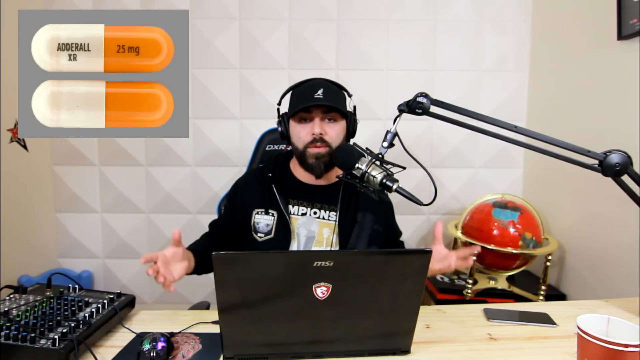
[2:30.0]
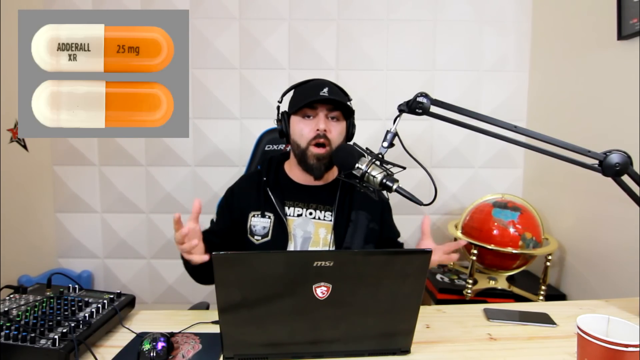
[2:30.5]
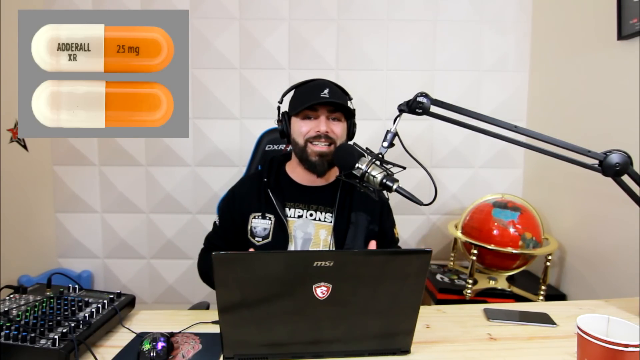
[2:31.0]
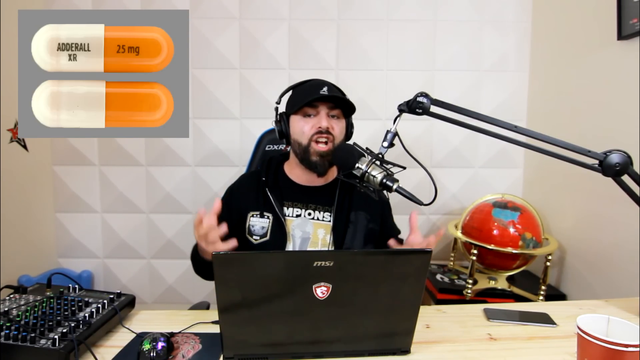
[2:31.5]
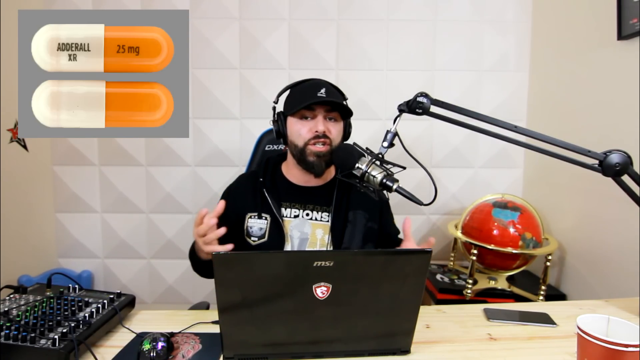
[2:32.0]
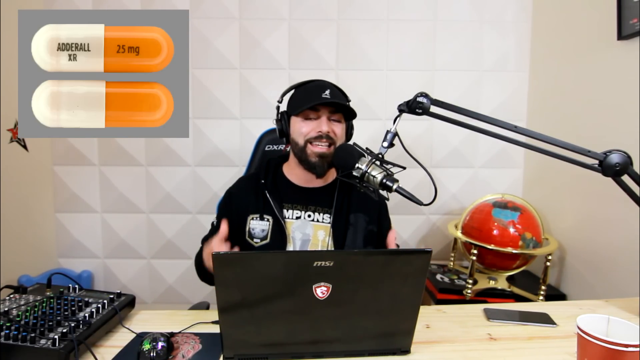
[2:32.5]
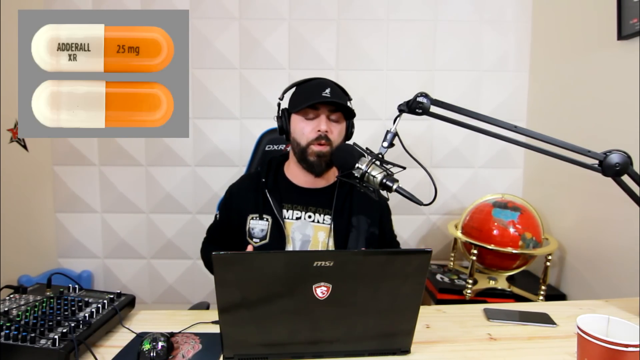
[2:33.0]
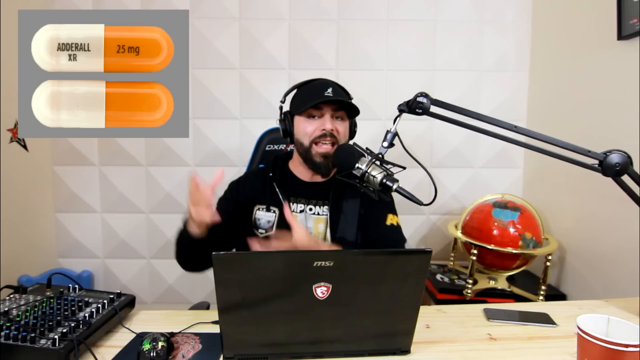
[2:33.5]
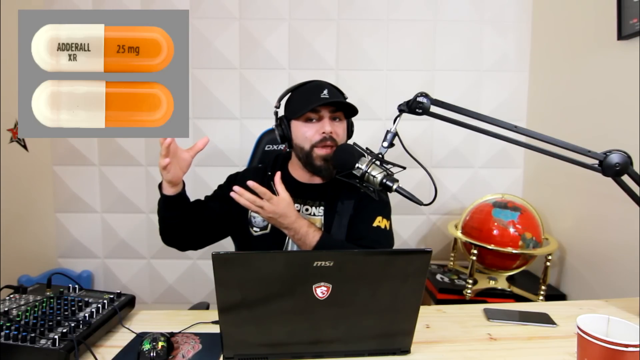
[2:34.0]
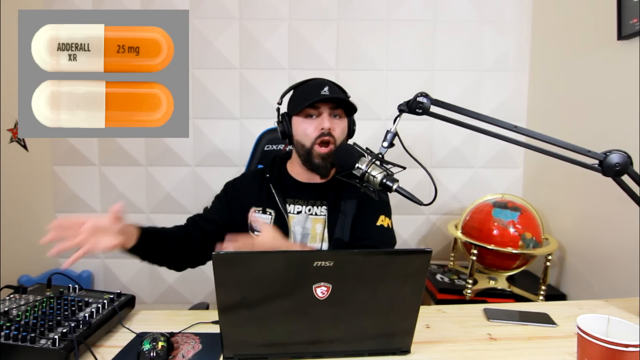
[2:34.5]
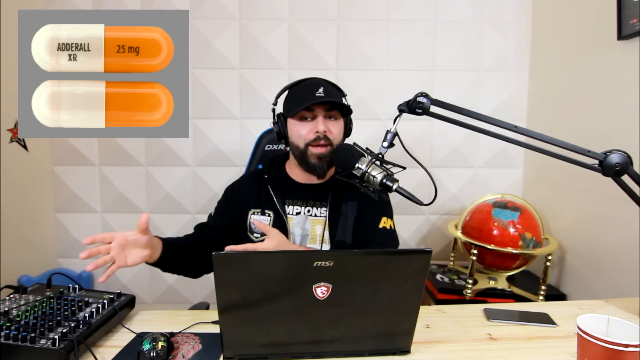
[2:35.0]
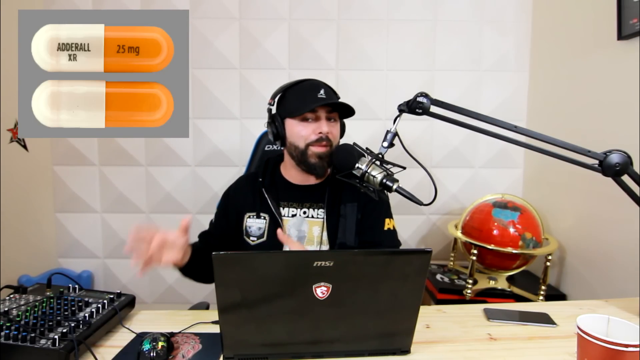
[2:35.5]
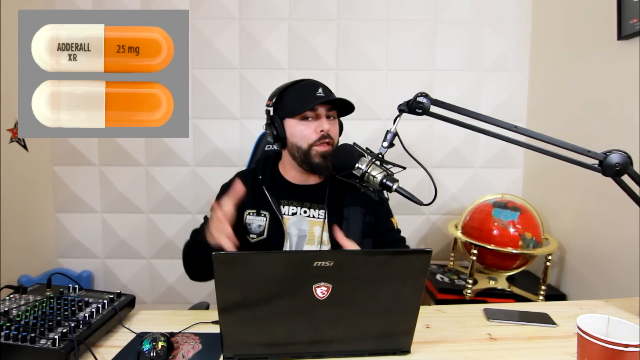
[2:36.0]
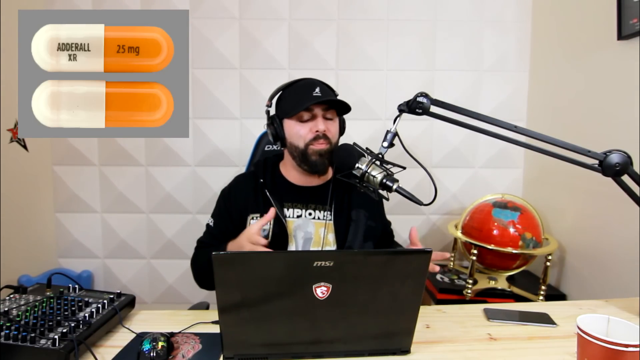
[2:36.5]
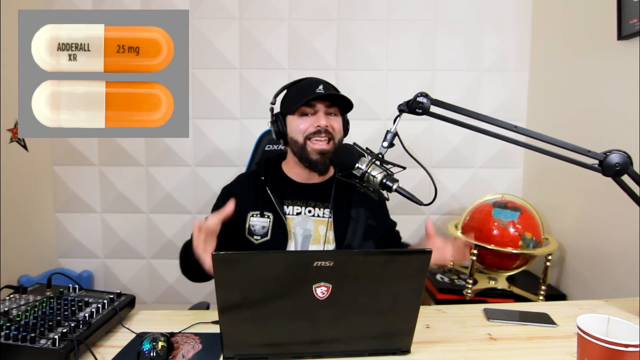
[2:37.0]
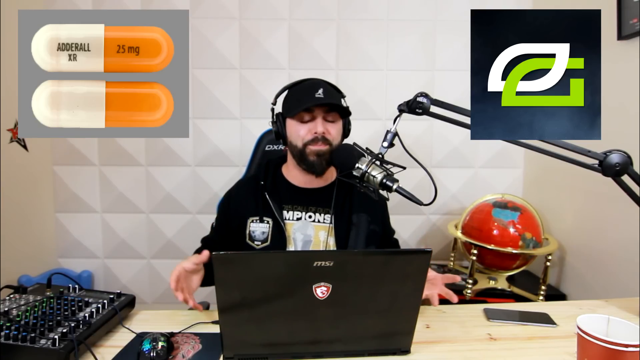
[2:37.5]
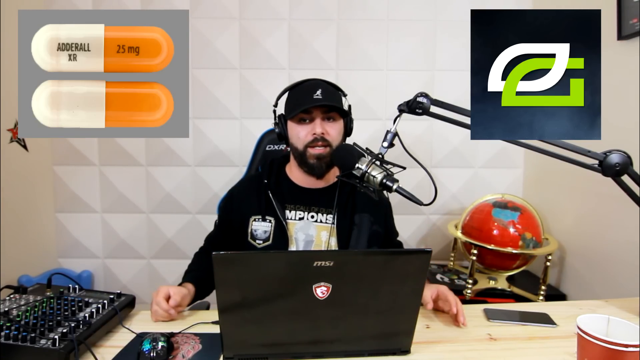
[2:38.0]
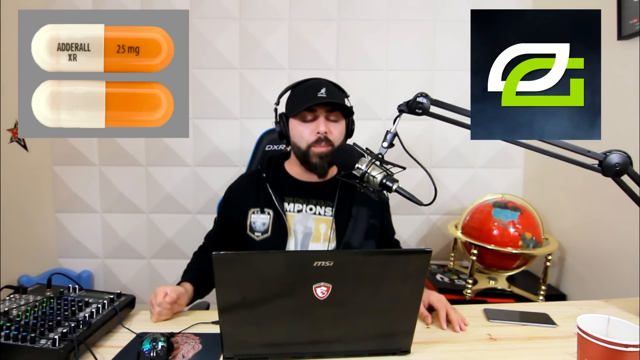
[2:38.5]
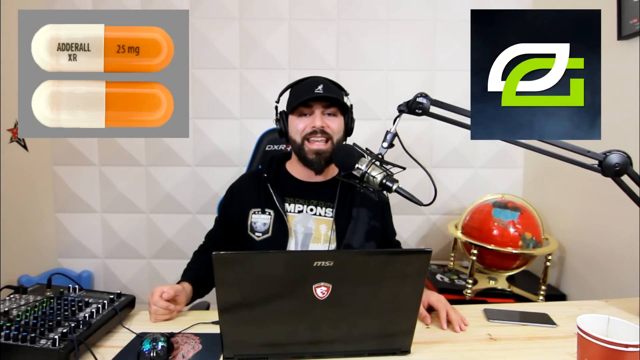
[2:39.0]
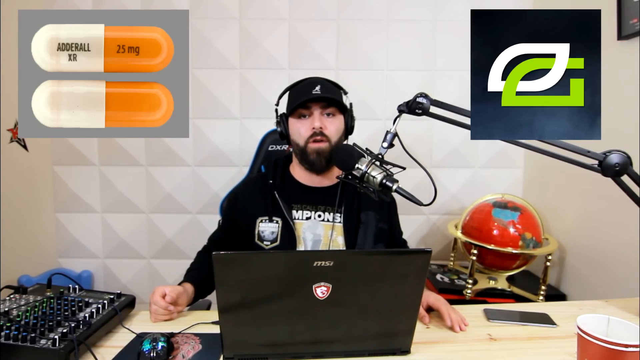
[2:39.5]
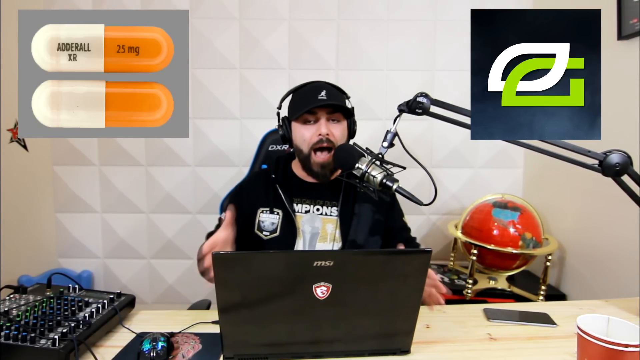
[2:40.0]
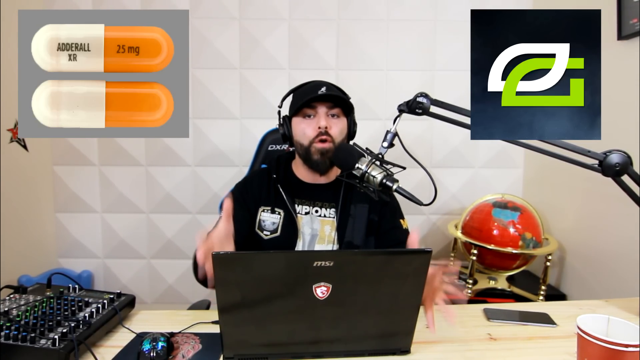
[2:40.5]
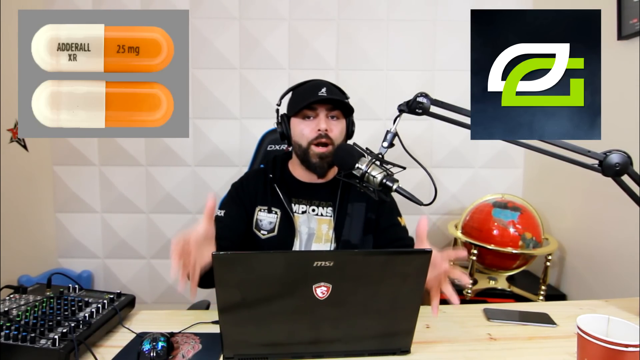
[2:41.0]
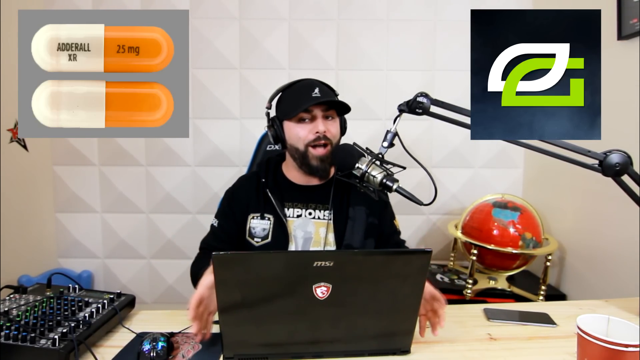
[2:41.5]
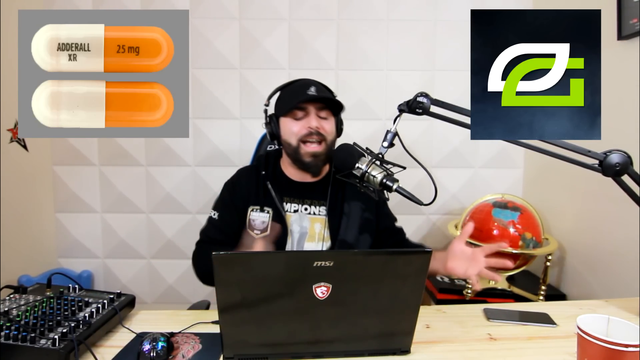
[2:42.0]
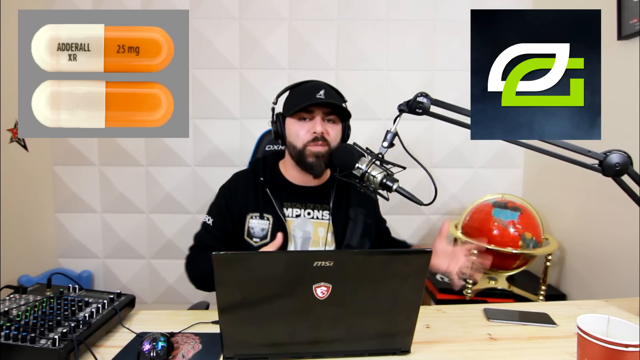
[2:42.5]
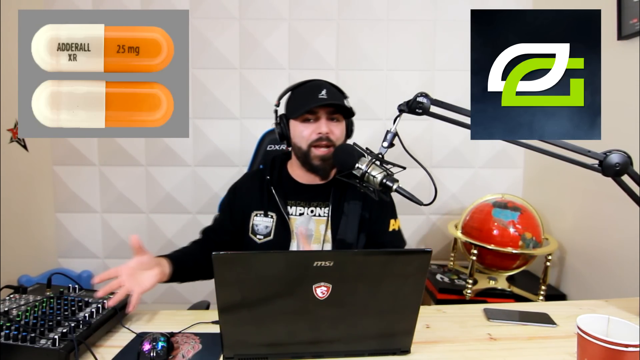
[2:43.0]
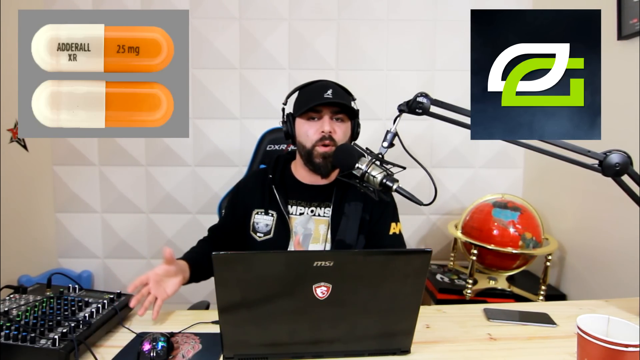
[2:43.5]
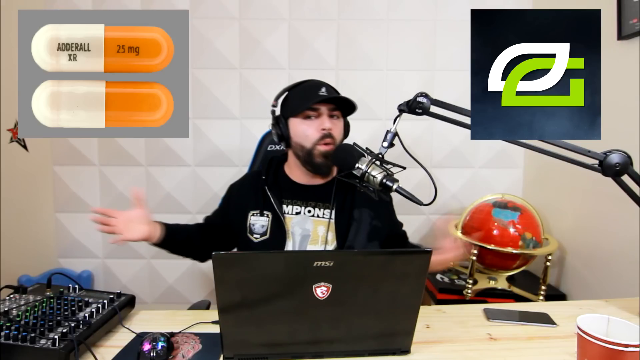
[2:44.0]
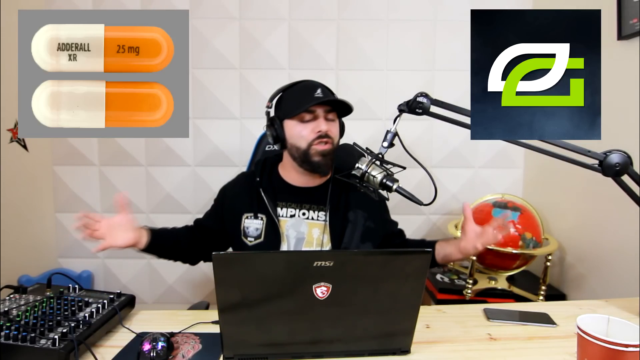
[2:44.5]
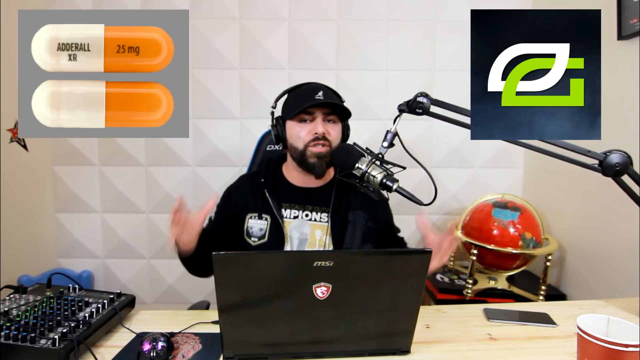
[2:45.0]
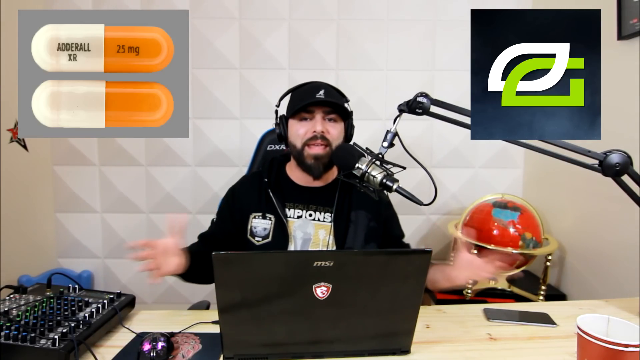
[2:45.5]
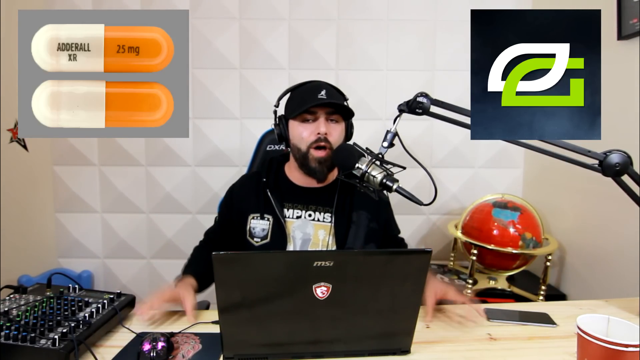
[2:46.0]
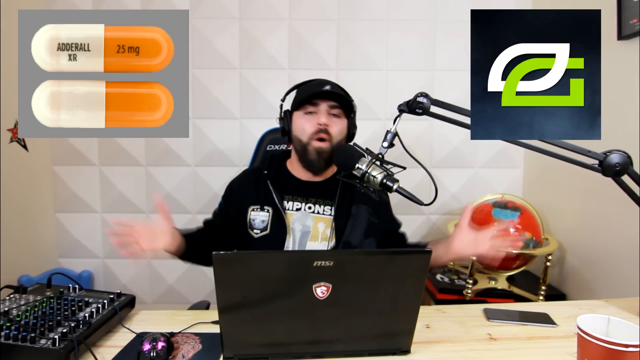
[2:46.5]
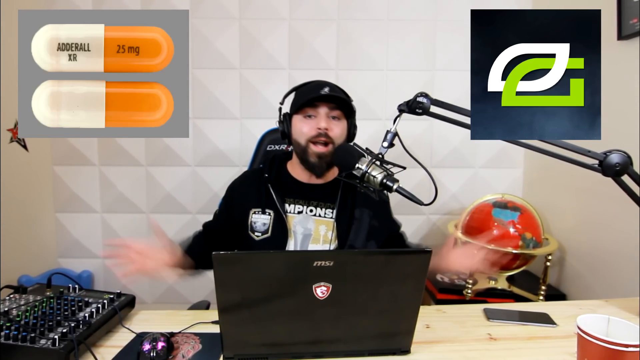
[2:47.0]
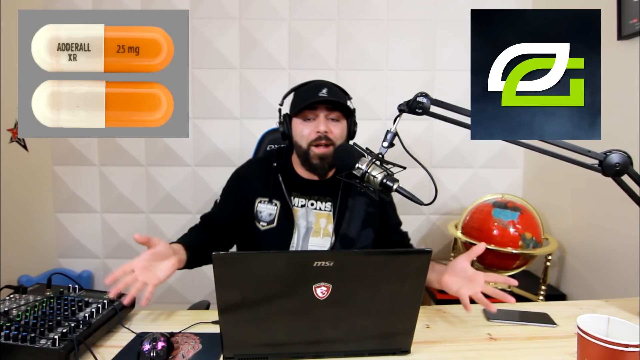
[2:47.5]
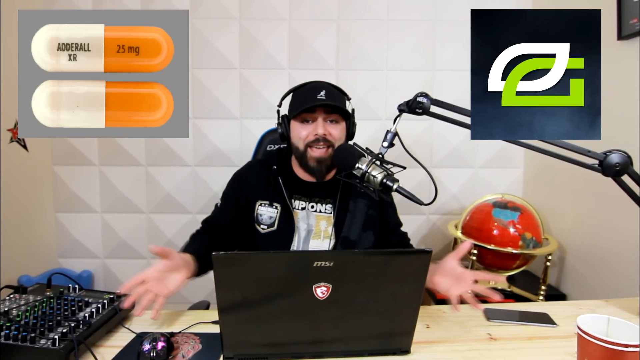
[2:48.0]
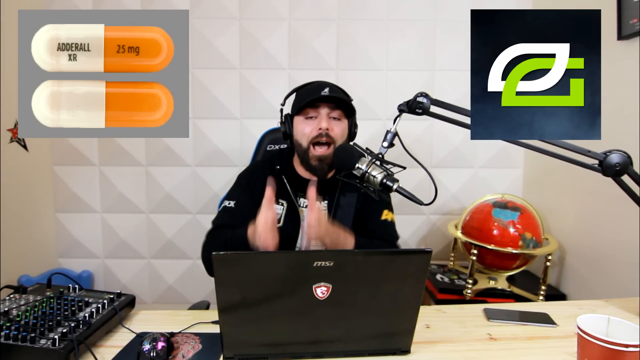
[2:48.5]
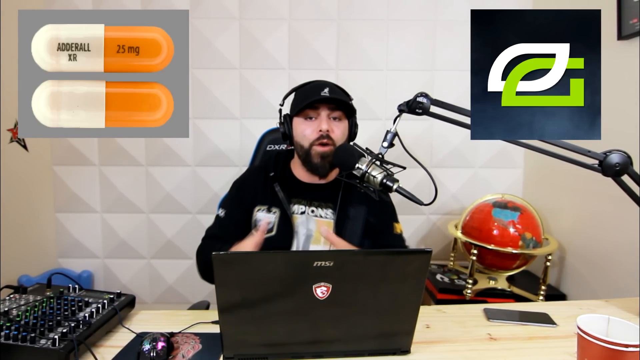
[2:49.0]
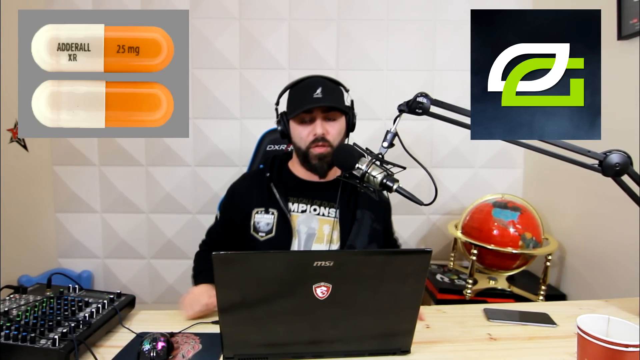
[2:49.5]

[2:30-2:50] The same man talks to his viewers into the microphone, using both hands to talk passionately. A picture pops up in the top left-hand corner of the screen showing two white and orange pills. The top pill has writing on it, "Adderall XR" on one side and "25 milligrams" on the right, while the bottom pill has none. Next, a box pops up on the right-hand side of the screen with some type of symbol in white and green. The man keeps talking directly to his viewers, using his hands very passionately. The globe is still visible in the back right-hand corner, along with the two red cups and his cell phone on the table.